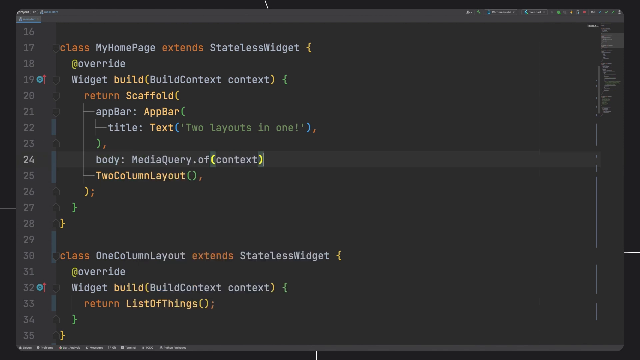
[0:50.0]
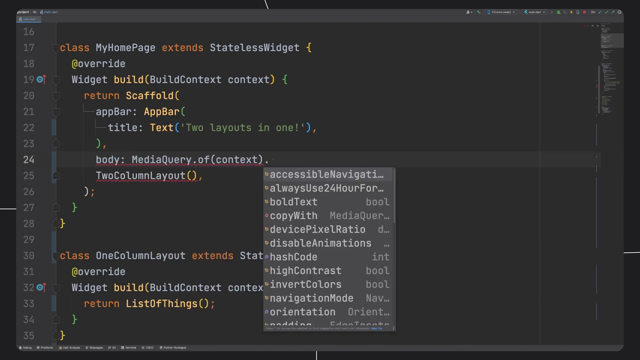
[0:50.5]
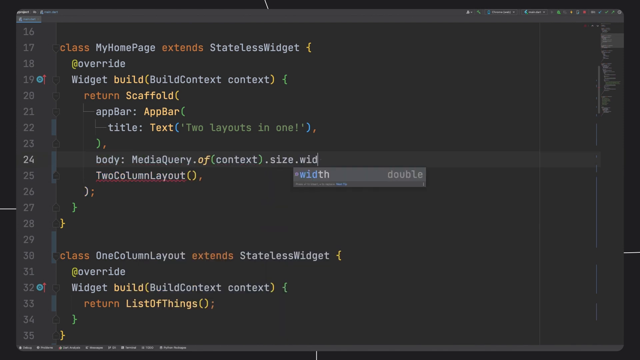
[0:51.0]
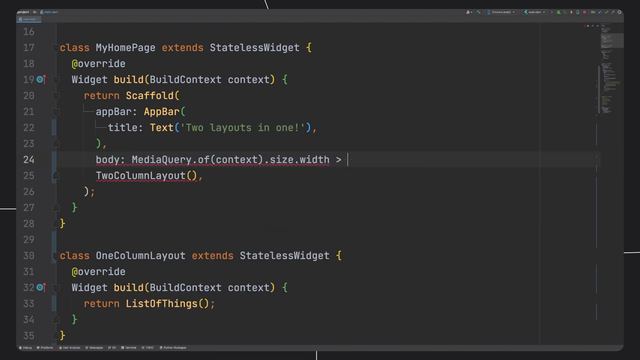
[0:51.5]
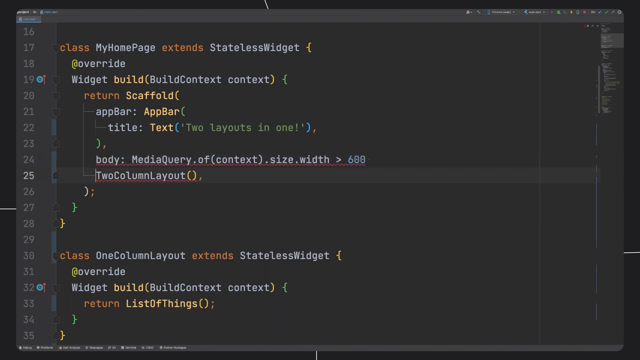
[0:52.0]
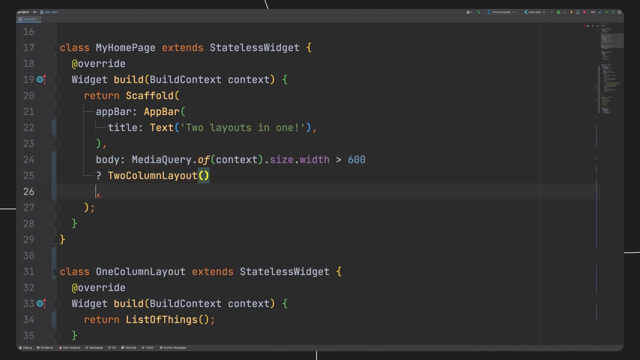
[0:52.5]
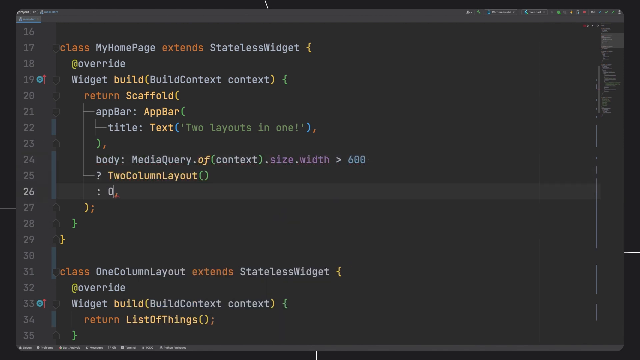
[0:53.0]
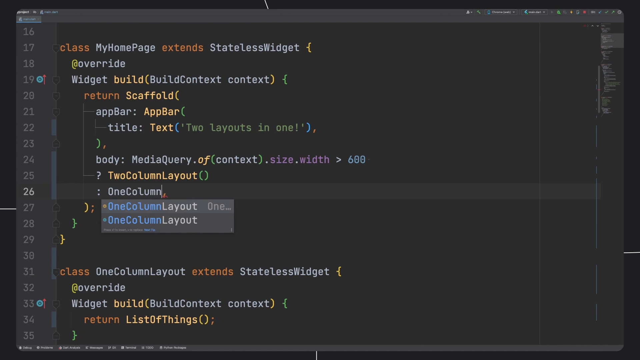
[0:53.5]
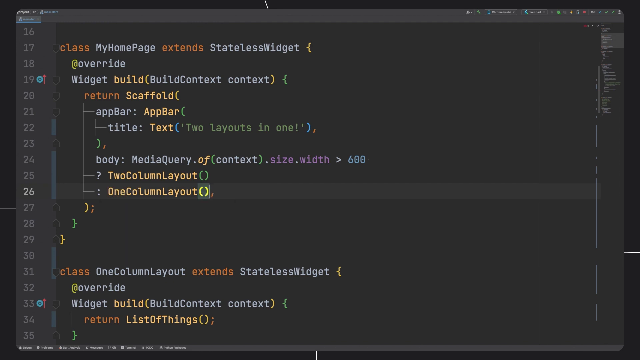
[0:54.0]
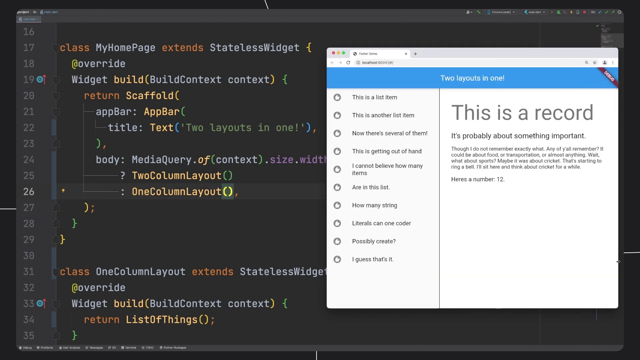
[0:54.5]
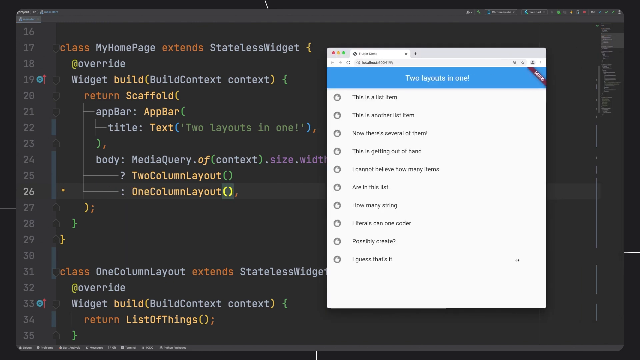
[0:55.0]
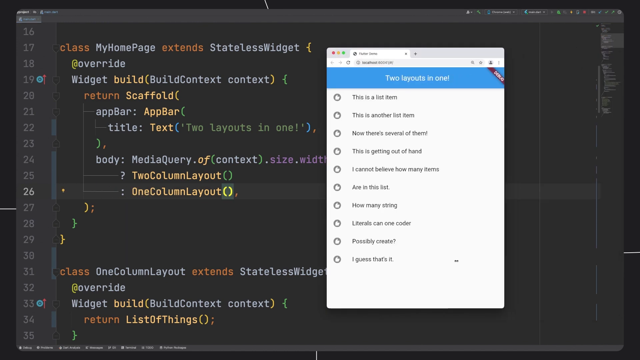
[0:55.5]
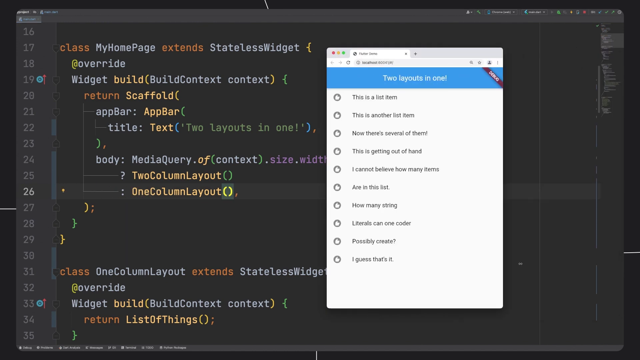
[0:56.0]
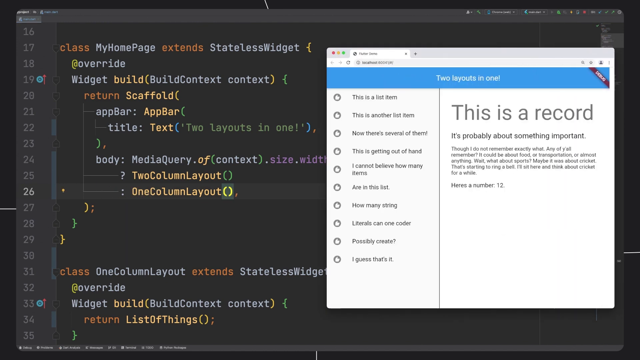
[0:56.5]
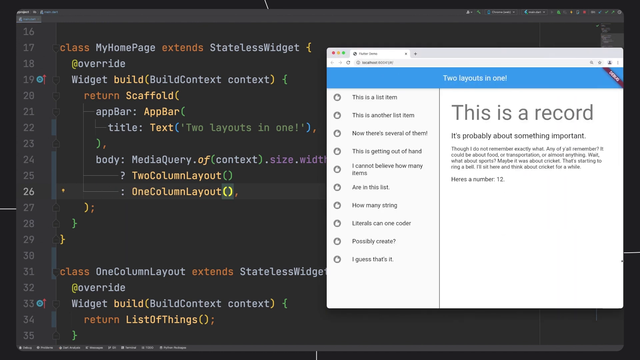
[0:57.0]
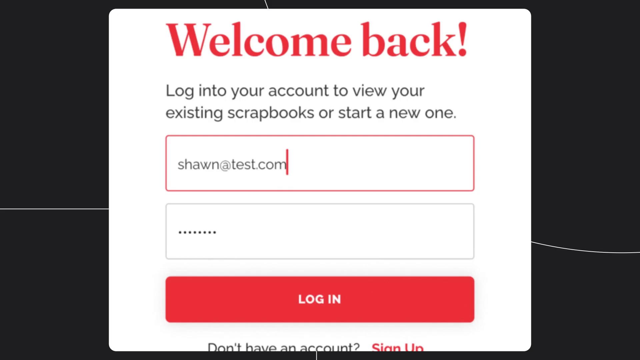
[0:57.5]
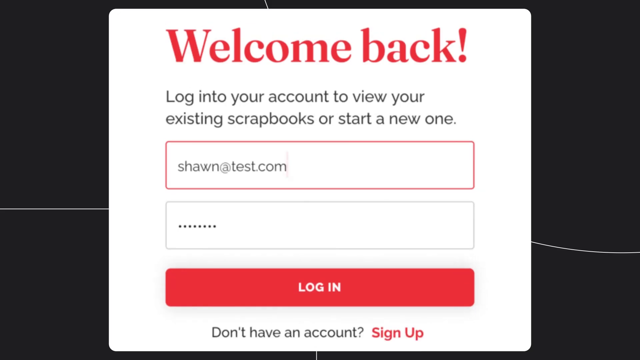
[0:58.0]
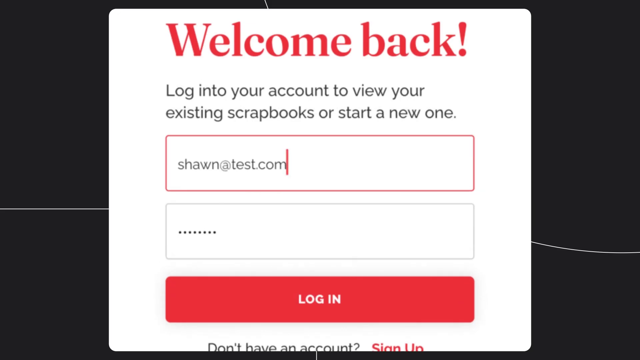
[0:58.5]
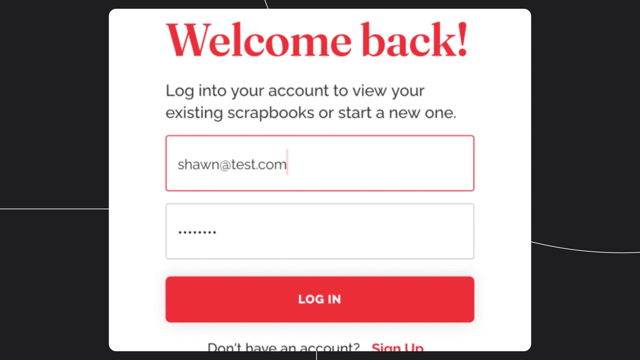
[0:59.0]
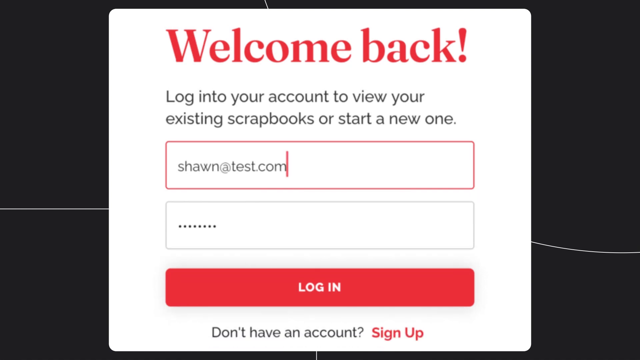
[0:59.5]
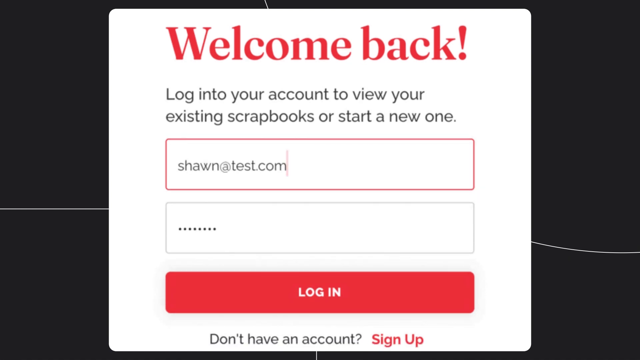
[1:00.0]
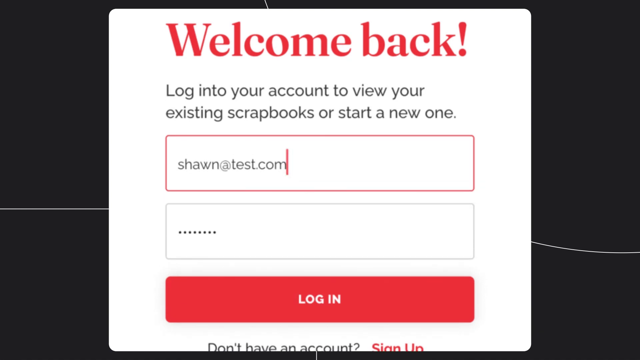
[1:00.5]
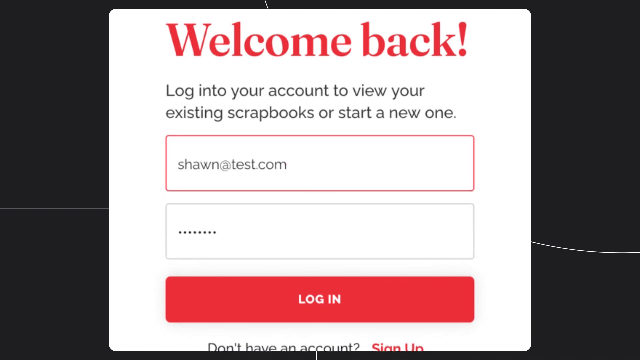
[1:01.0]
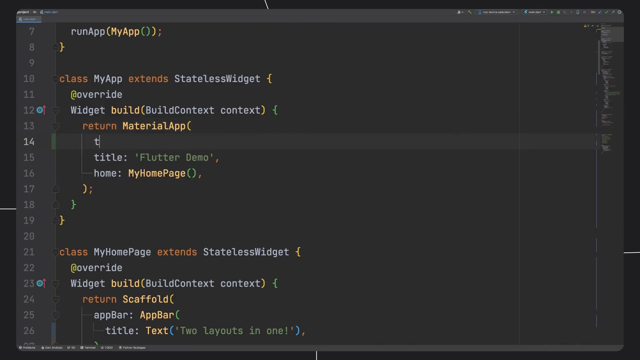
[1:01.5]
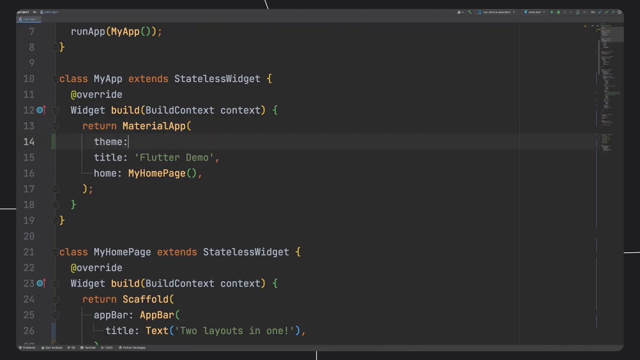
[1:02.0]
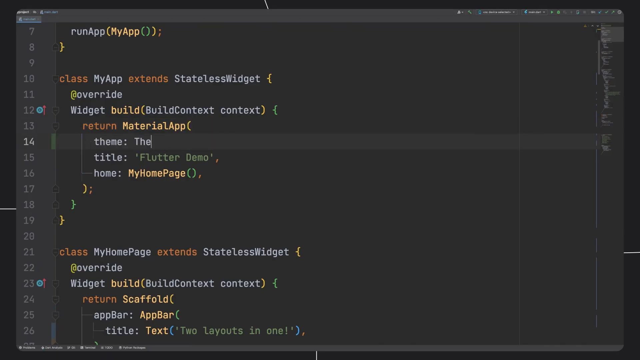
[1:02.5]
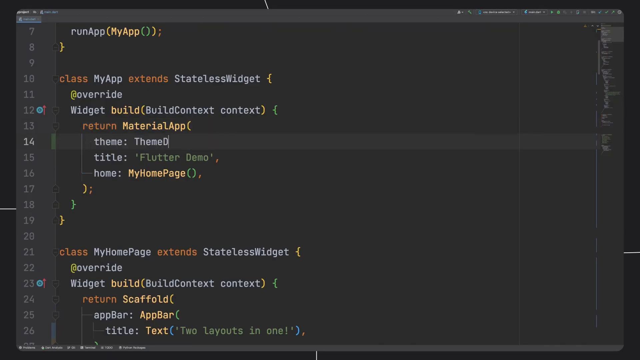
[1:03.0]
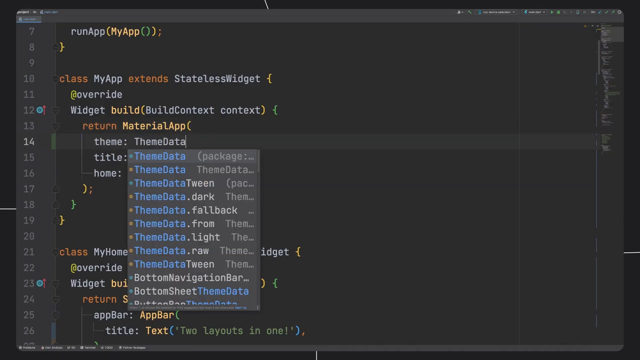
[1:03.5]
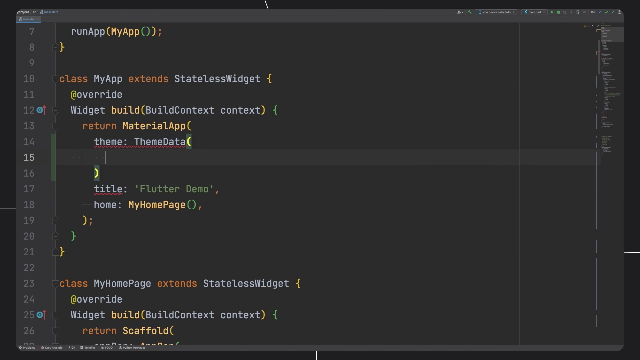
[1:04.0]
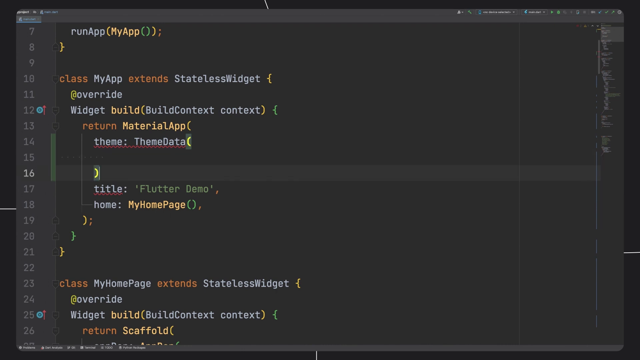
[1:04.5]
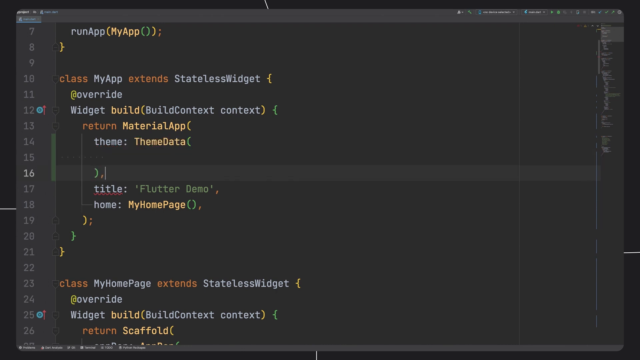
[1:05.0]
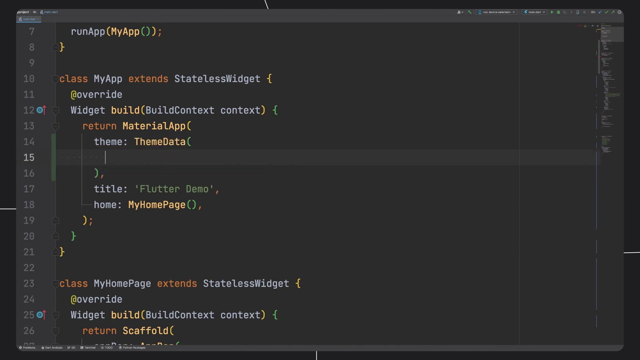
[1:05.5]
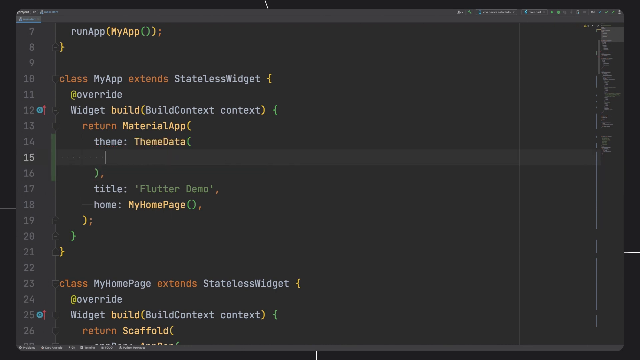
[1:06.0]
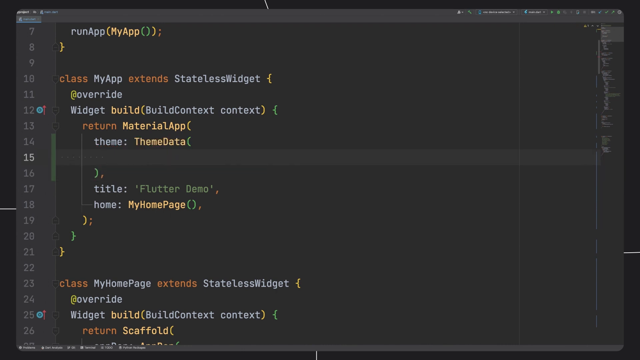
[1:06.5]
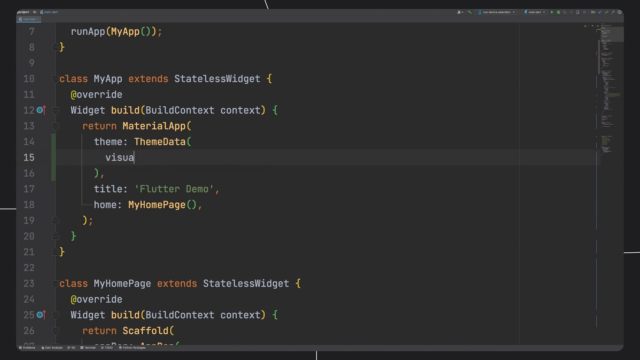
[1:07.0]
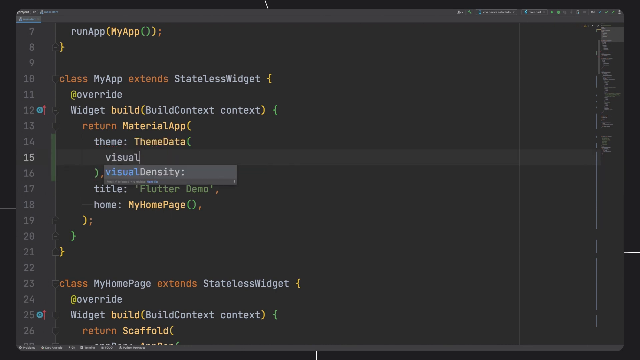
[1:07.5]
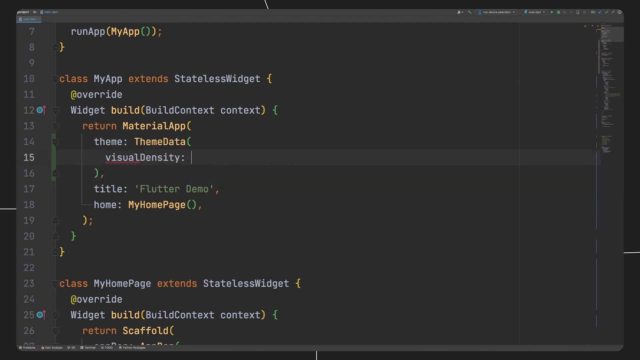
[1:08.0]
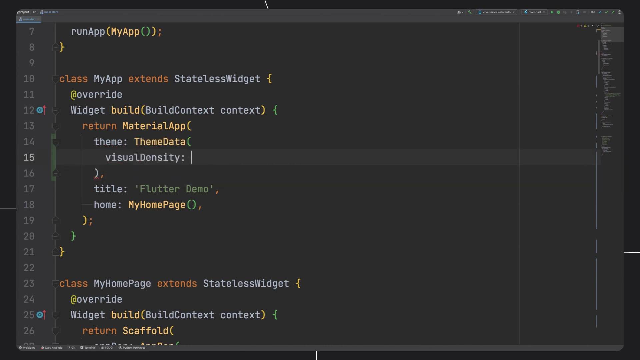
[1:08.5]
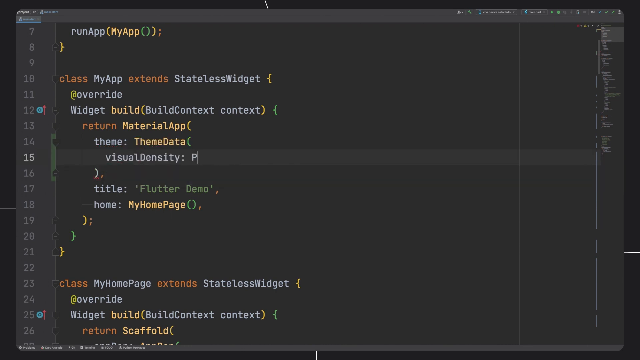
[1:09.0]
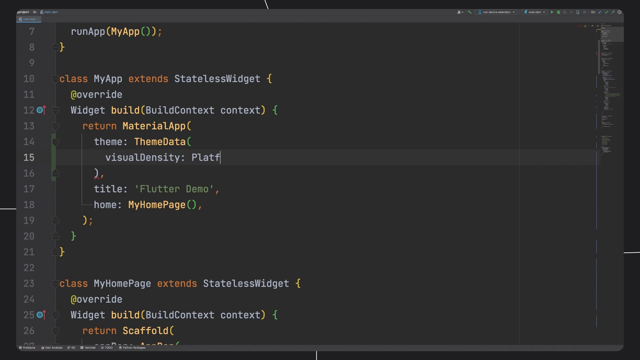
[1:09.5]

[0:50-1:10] A link pops up in the coding portal and the view goes back to the login page. Code appears with terms such as login theme, text theme, visual density, platform, one-column layout, widget, build, build context, override, return, add path, title text, layouts and media queries. The layout shows many layouts on one page, and the pages contain words in red, white, yellow and green, along with brackets, overrides and numbers. The login portal of the user is then shown, and the view goes to the portal screen.